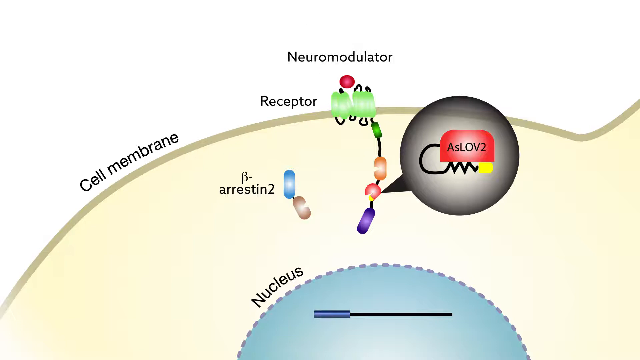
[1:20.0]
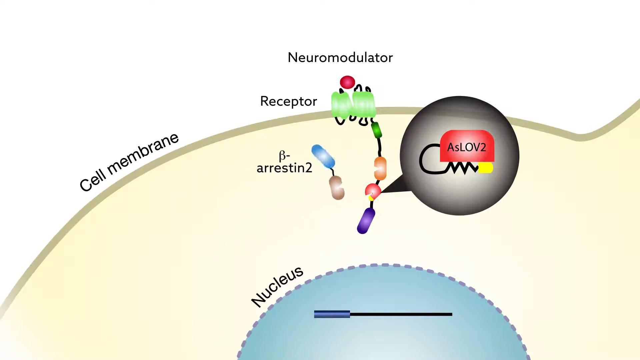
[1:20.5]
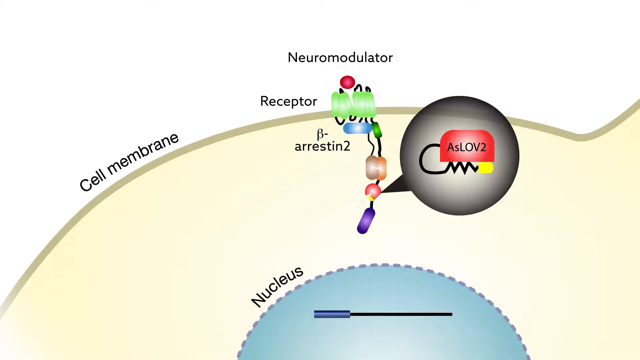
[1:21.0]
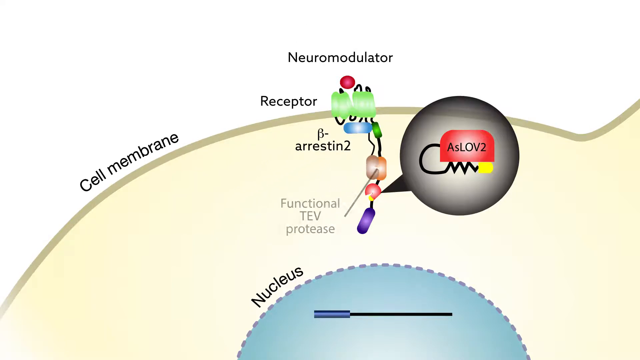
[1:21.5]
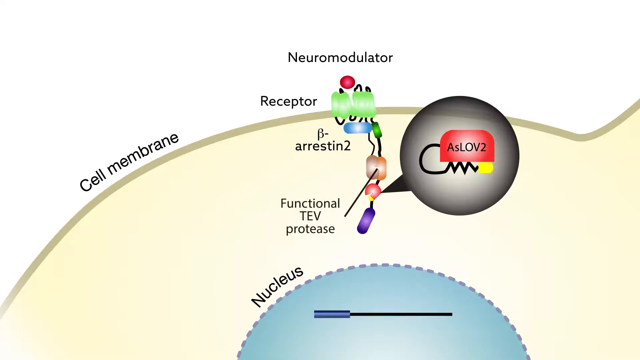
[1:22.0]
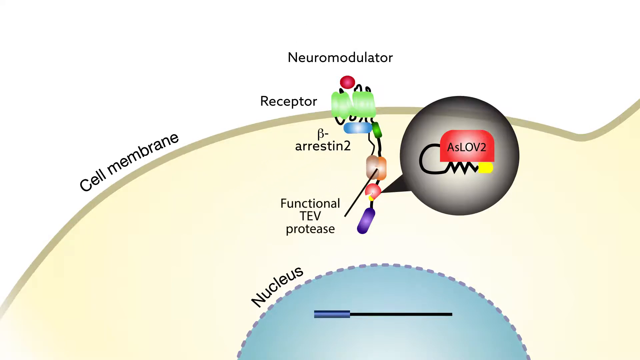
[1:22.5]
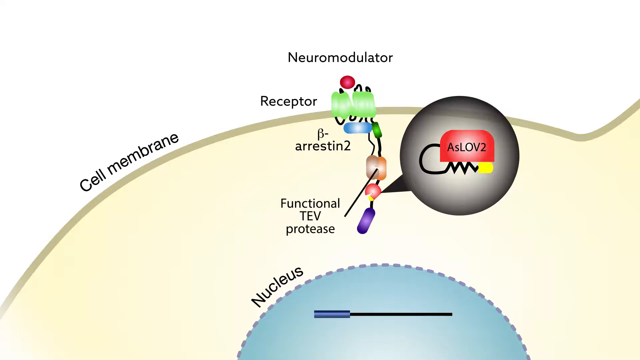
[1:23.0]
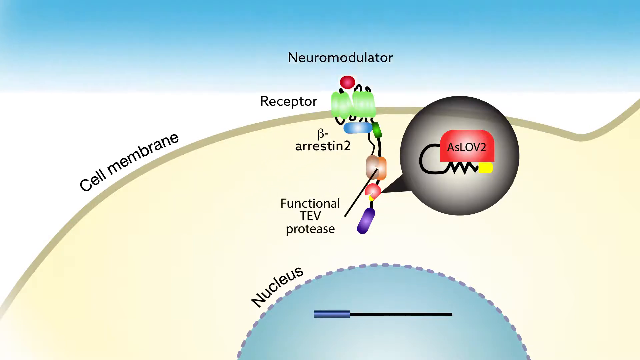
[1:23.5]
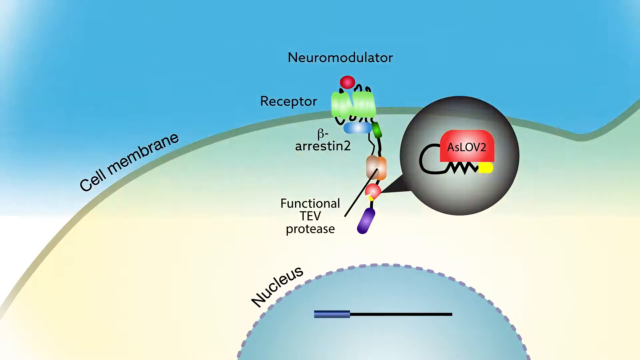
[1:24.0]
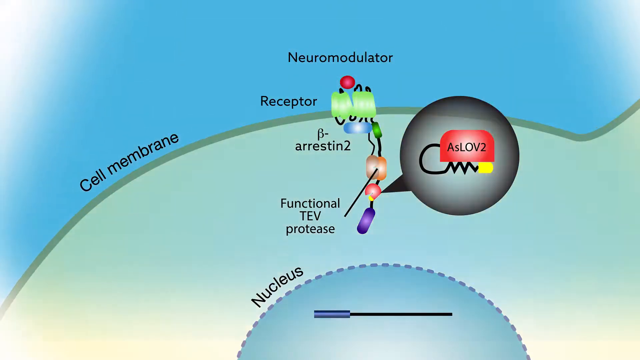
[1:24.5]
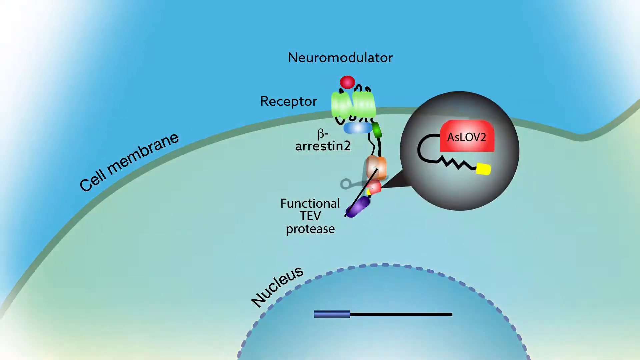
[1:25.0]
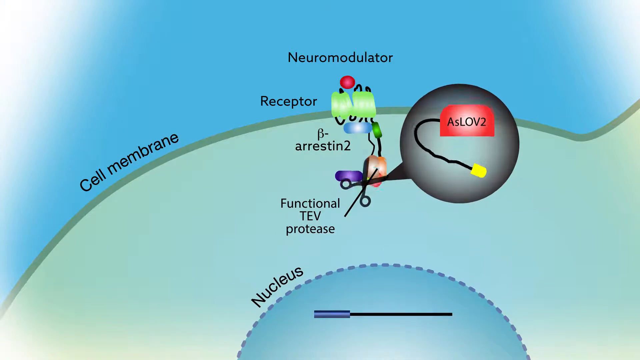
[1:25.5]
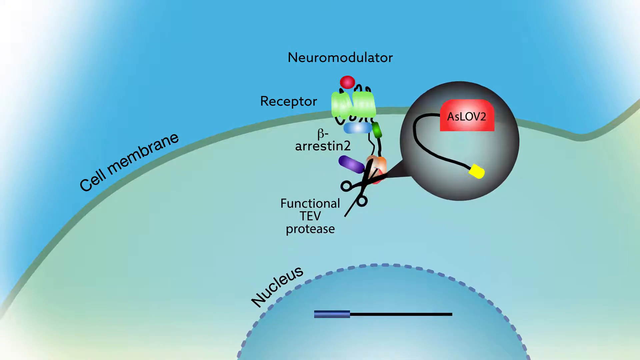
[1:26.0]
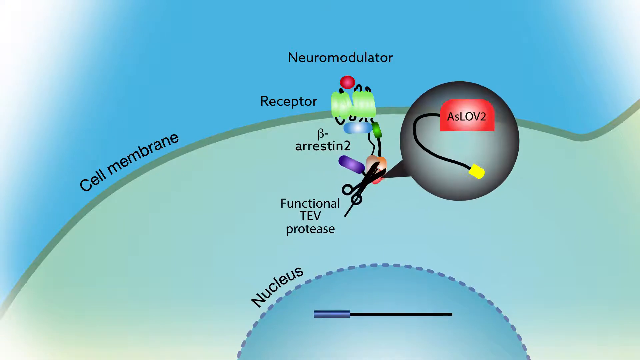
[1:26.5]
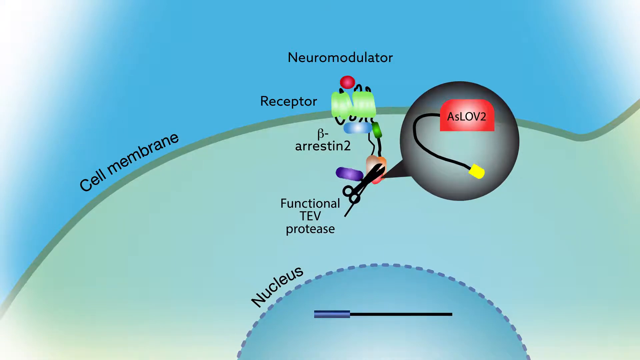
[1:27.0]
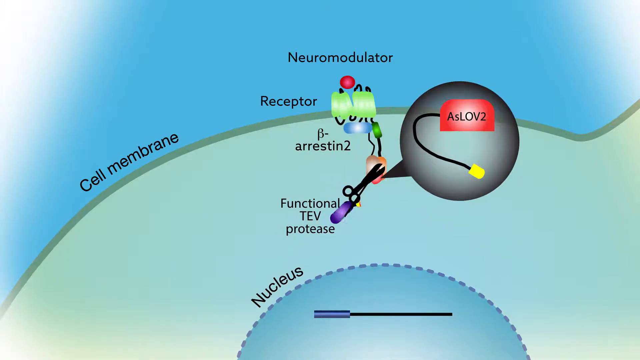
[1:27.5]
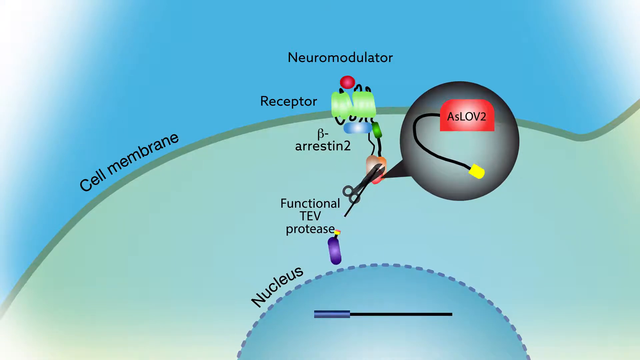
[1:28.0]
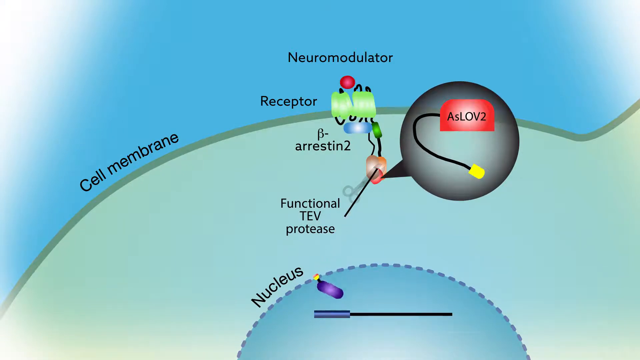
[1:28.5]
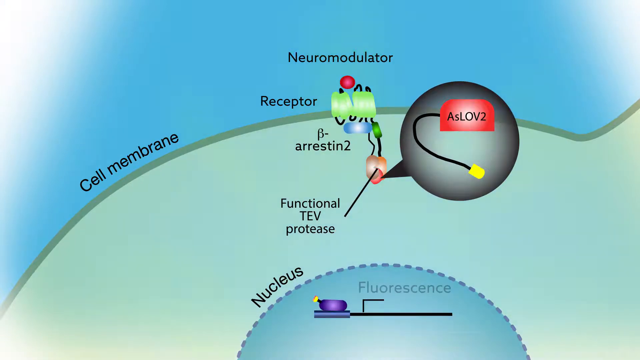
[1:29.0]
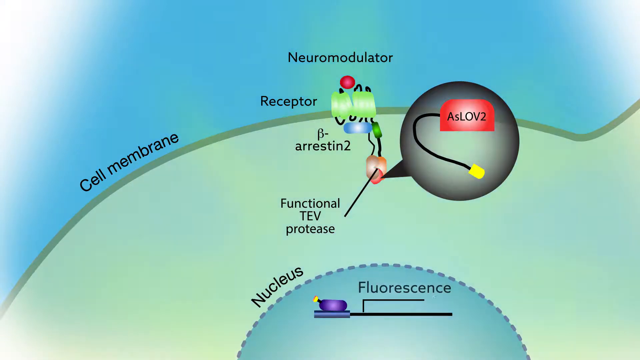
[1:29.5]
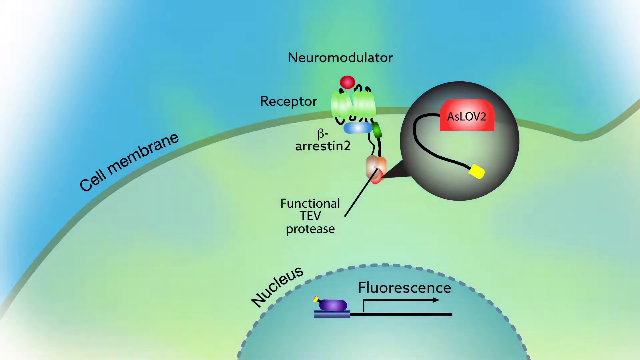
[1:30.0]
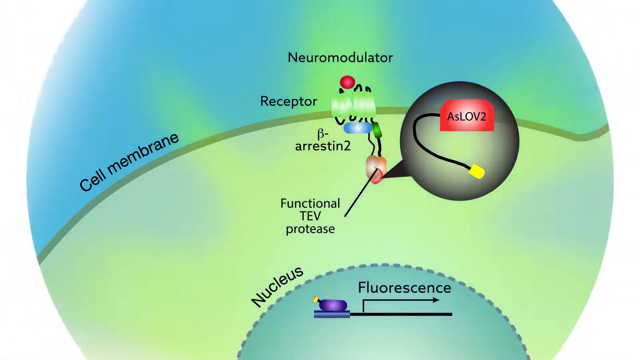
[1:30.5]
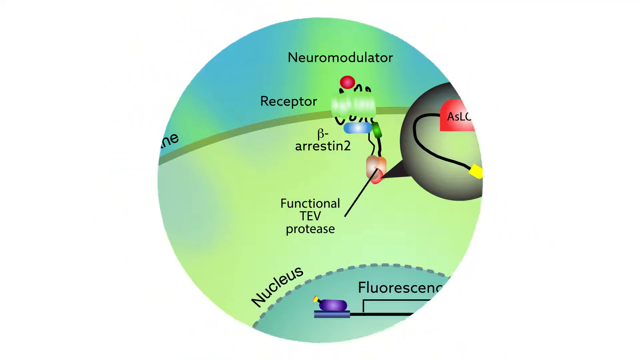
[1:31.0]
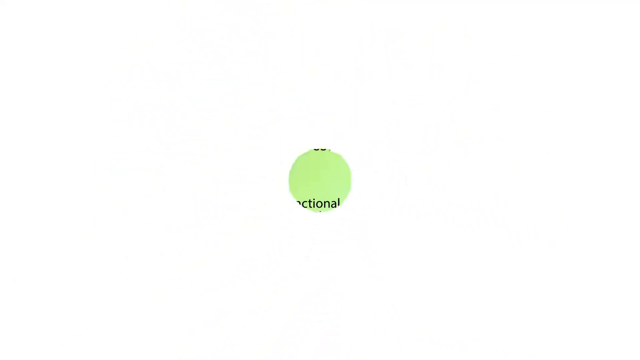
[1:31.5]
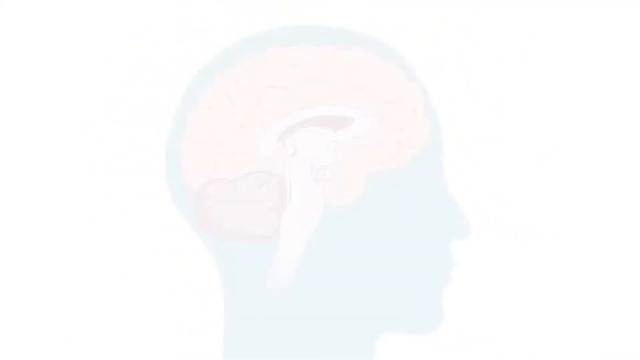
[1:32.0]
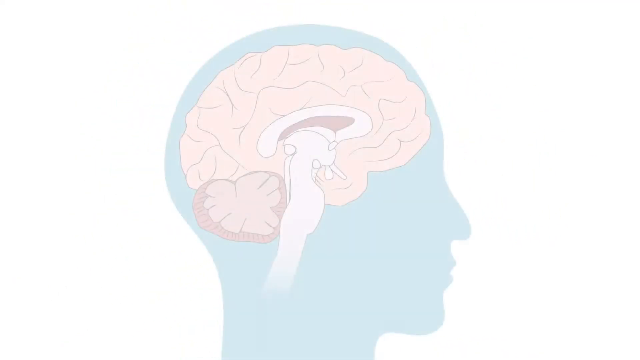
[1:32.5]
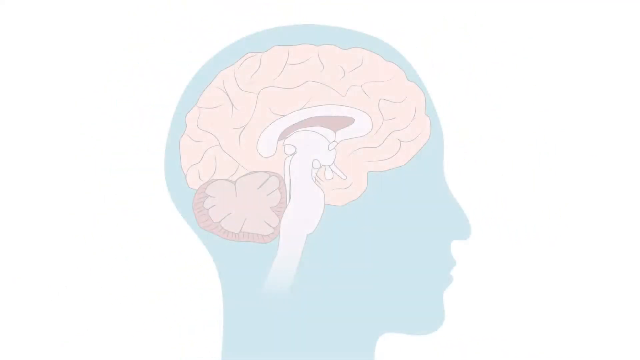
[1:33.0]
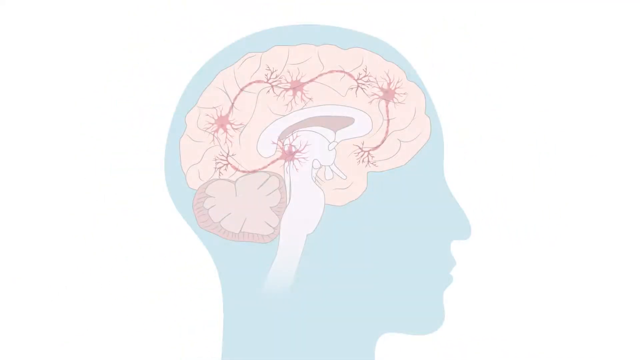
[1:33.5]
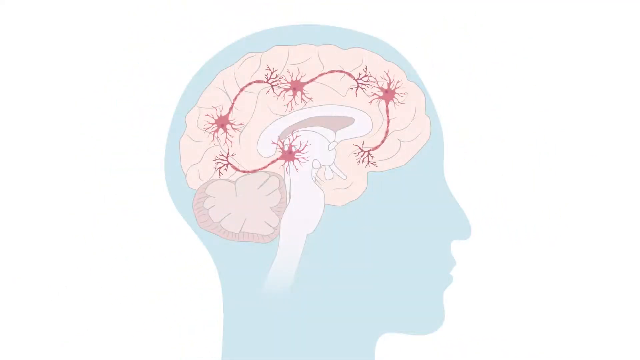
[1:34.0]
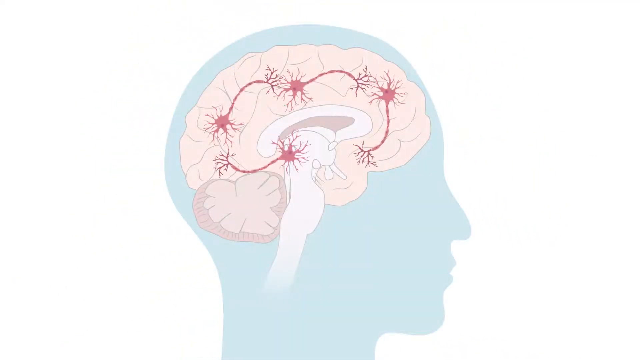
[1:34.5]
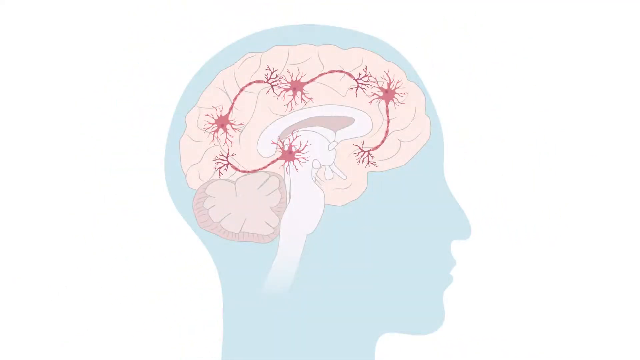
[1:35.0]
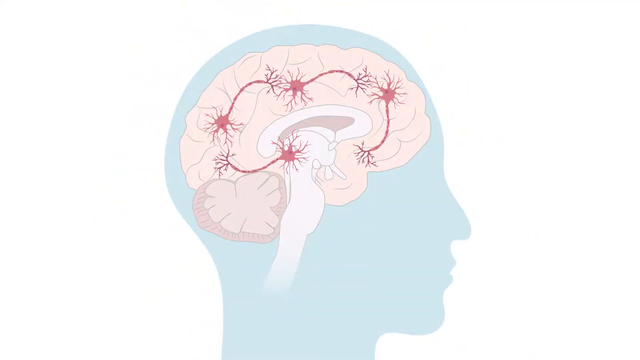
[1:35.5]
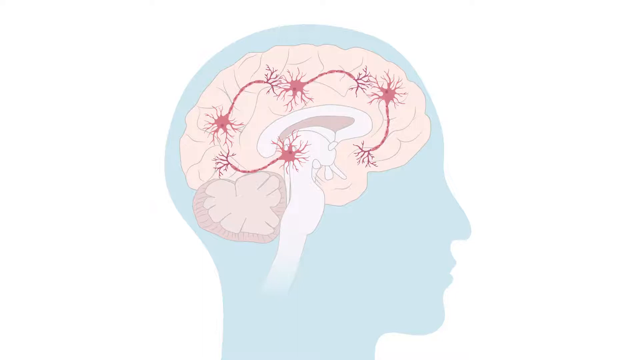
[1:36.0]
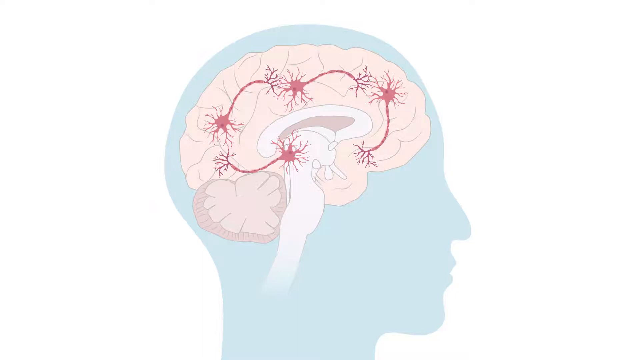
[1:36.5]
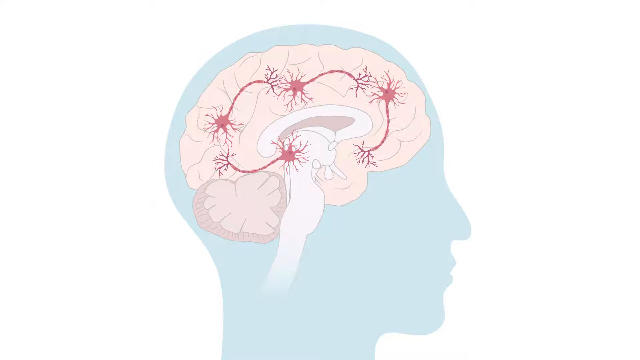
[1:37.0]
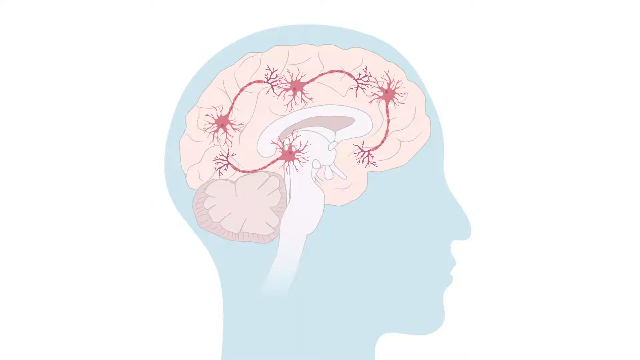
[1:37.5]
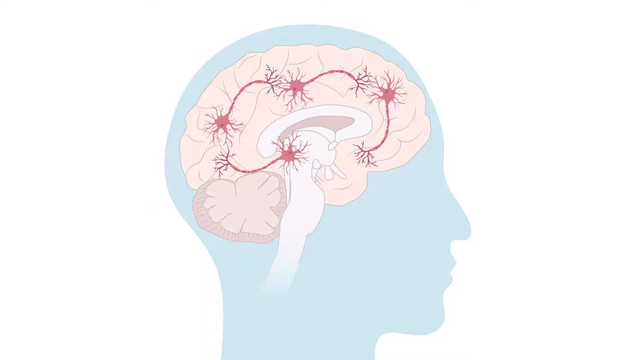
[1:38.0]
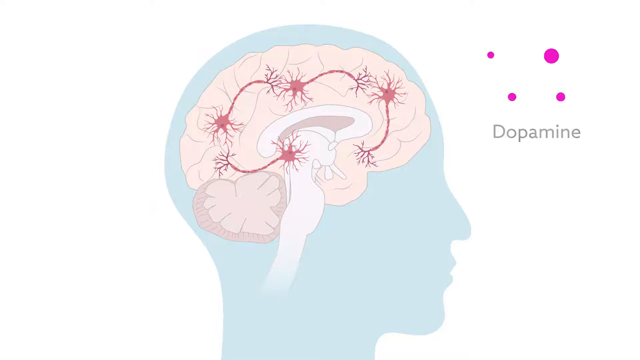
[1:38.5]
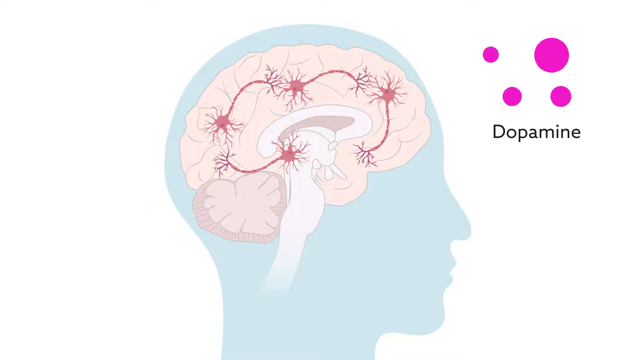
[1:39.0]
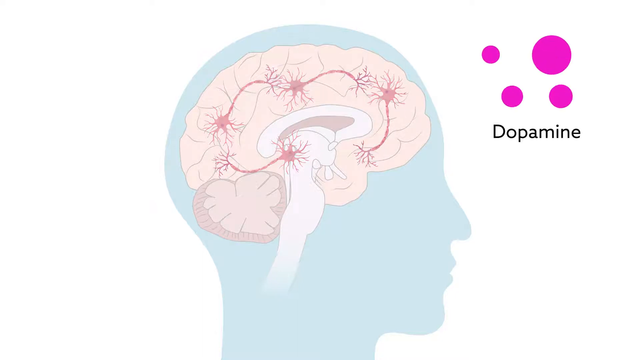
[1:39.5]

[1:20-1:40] The animation shows the neuromodulator connected to the receptor and the B-Aristin II, with the red dot still expanded and magnified as the ASLOV II. At the top, a blue glow comes down onto this part of the diagram, illuminating it. Black scissors come up around the part above the ASLOV II and cut off a purple part, which drops down to the nucleus and becomes a fluorescence. Next, a diagram of someone's face shows their brain, which is pink, with a bunch of sort of veins around it.